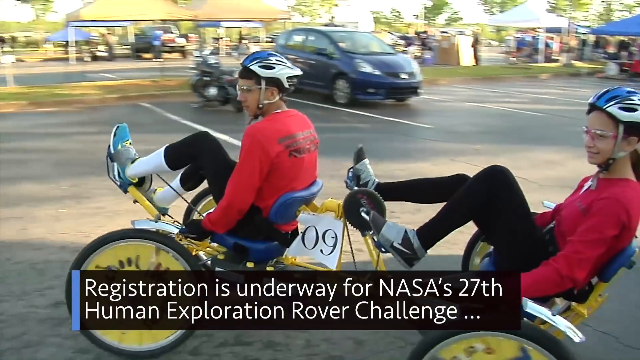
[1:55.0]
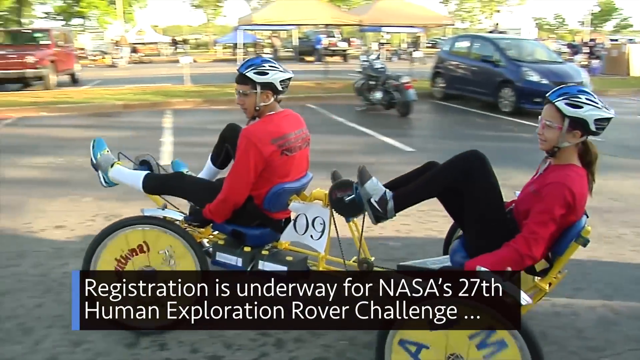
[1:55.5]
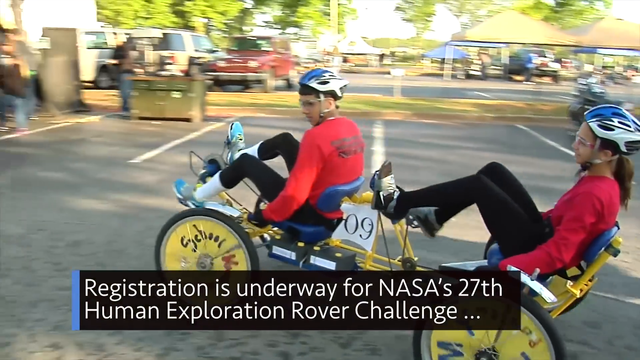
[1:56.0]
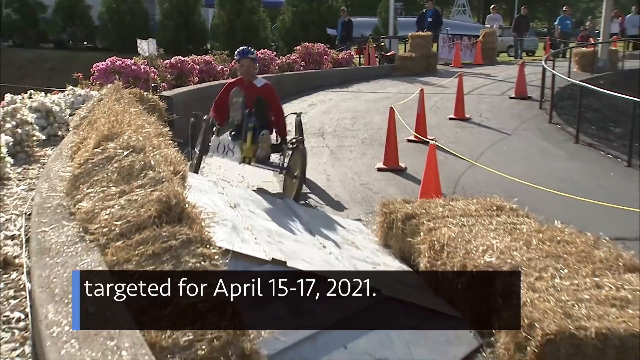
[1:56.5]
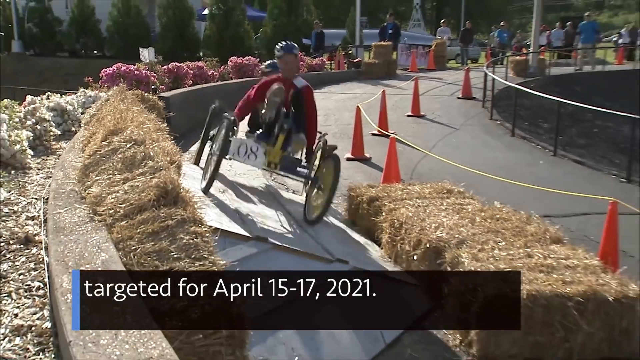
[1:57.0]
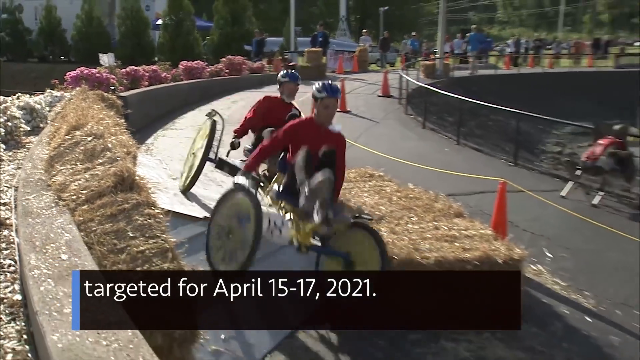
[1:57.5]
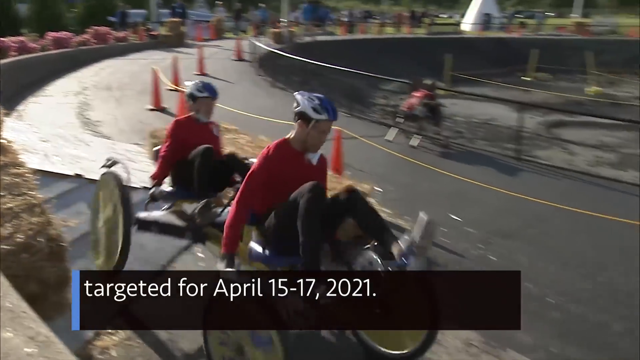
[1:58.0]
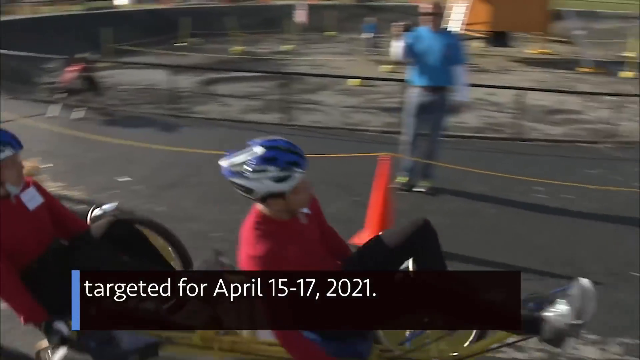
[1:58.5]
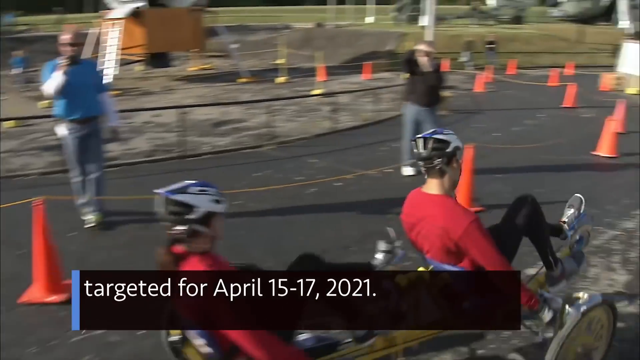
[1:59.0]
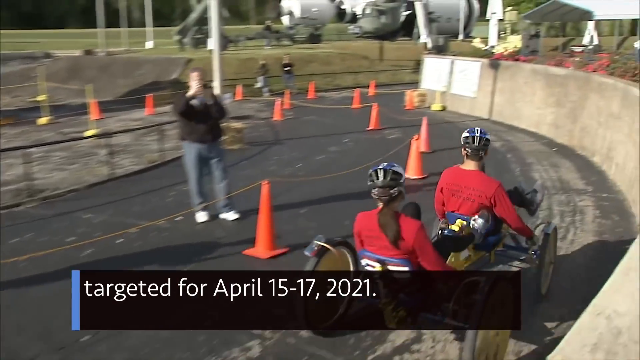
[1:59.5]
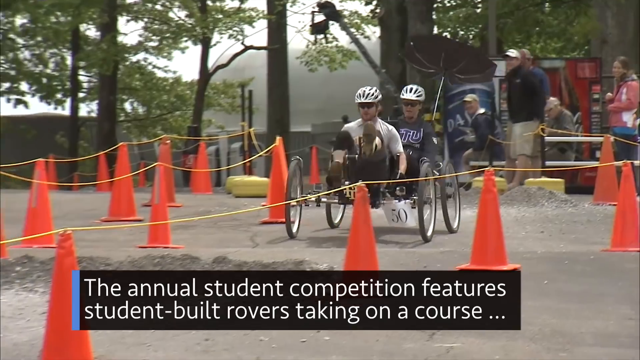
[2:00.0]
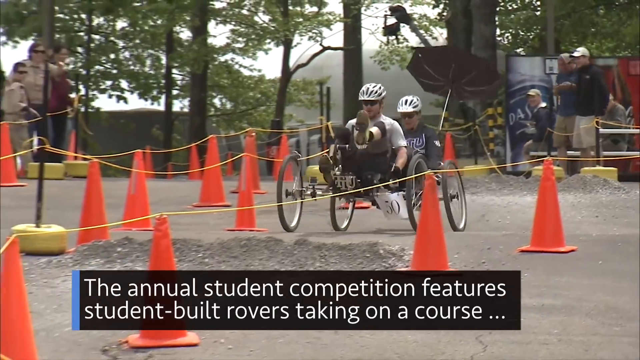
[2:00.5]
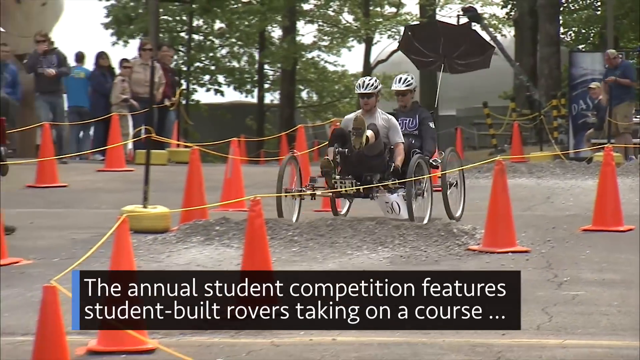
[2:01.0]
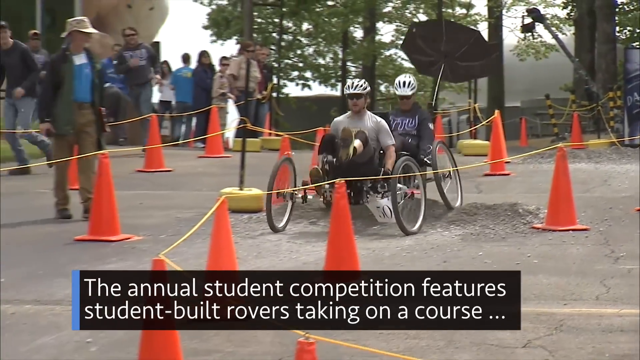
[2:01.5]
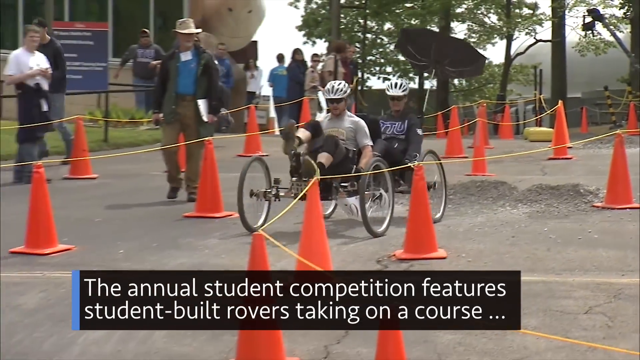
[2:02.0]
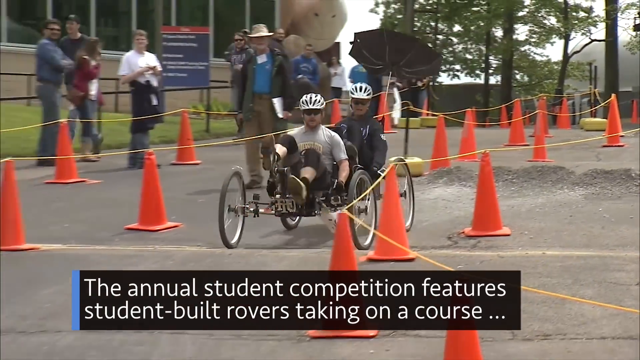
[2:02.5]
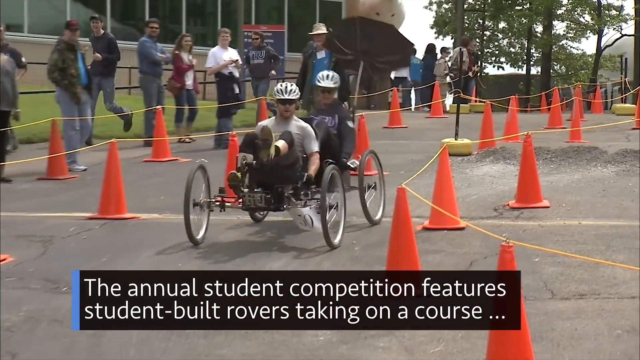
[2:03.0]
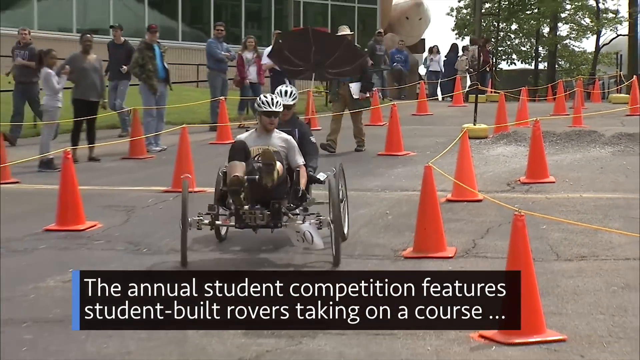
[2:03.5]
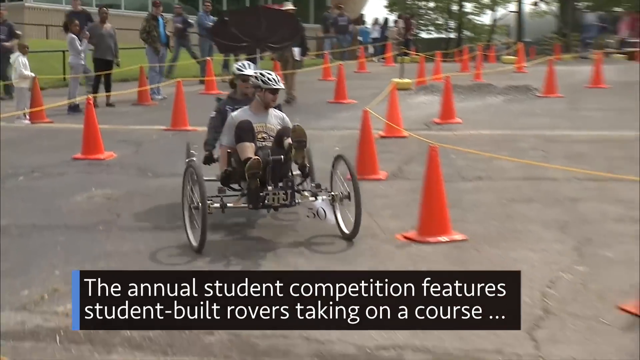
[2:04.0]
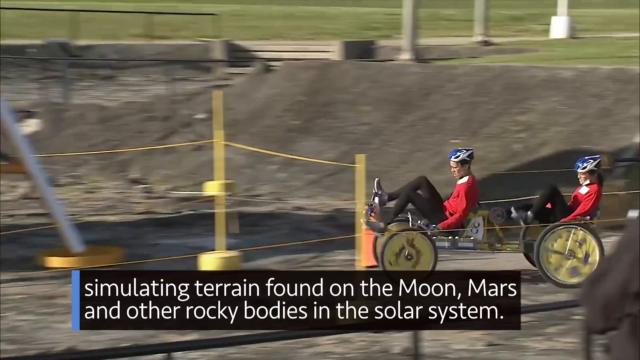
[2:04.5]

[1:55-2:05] What looks like a competition to build rovers takes place on a circular race course. A couple of what look like manual go-karts are built in tandem so that two people can pedal while riding these student-built rovers. The competition simulates the terrain the rovers will actually ride on, the terrain of the moon. One team is dressed in red shirts and black pants with blue helmets; on the other team, one person wears a gray shirt and one wears a black shirt, both with white helmets.